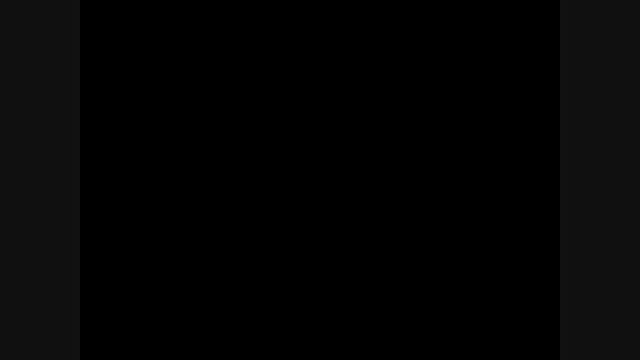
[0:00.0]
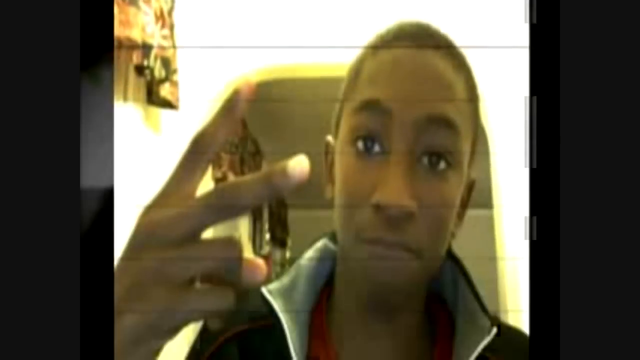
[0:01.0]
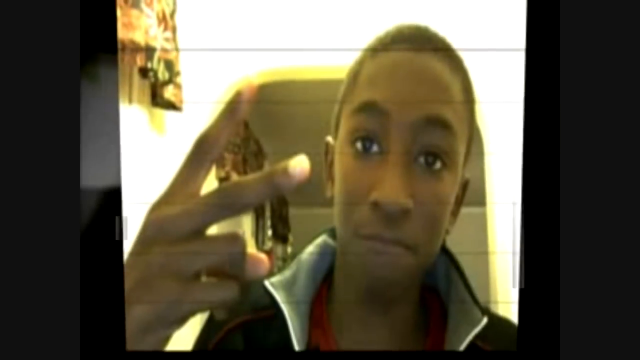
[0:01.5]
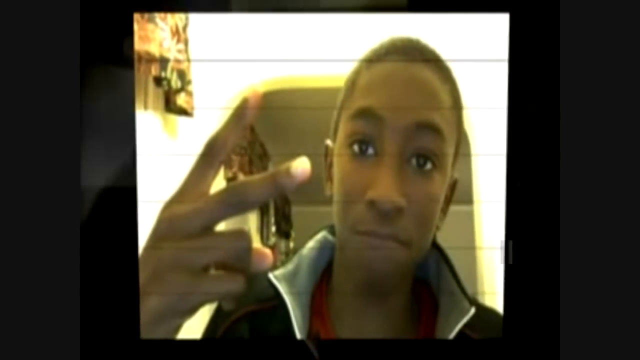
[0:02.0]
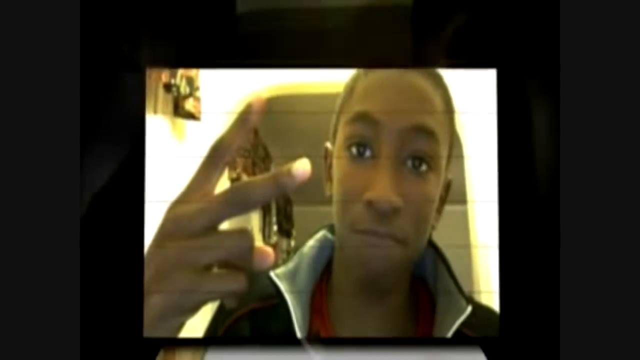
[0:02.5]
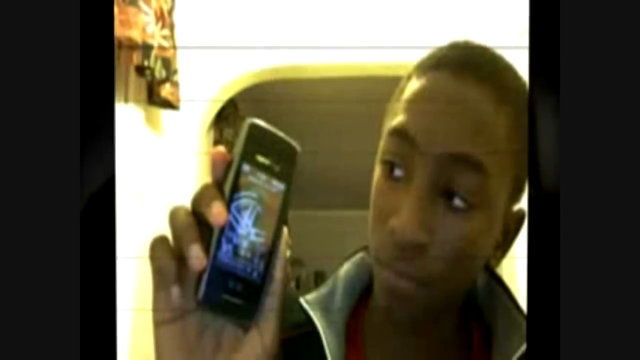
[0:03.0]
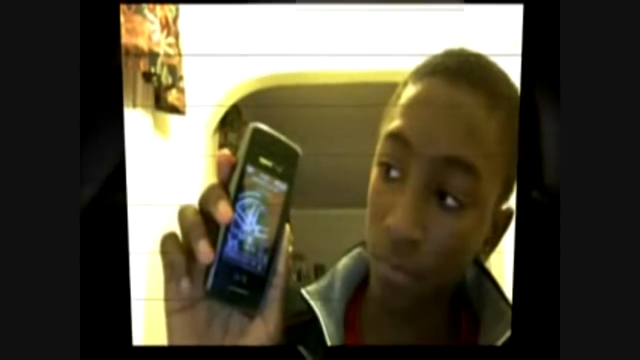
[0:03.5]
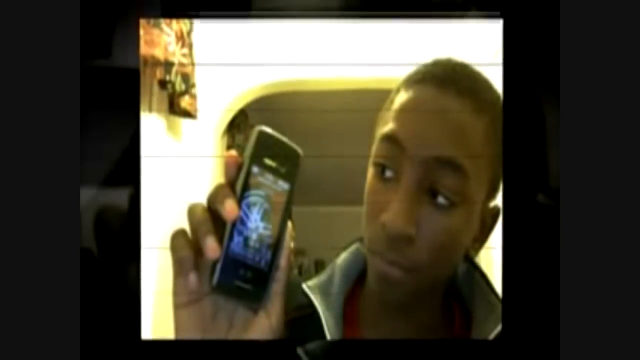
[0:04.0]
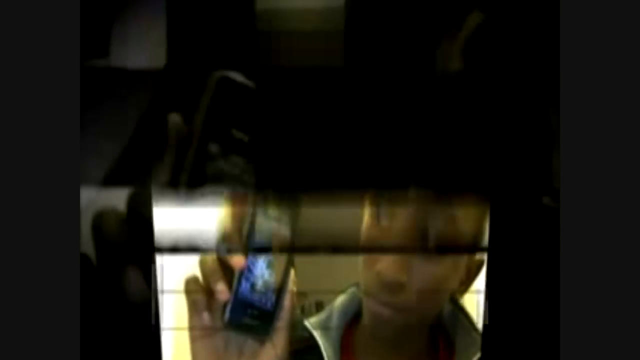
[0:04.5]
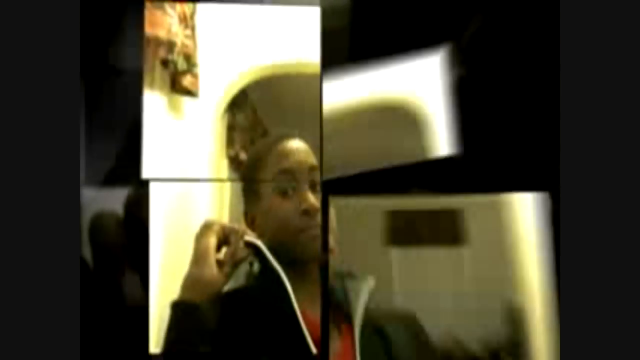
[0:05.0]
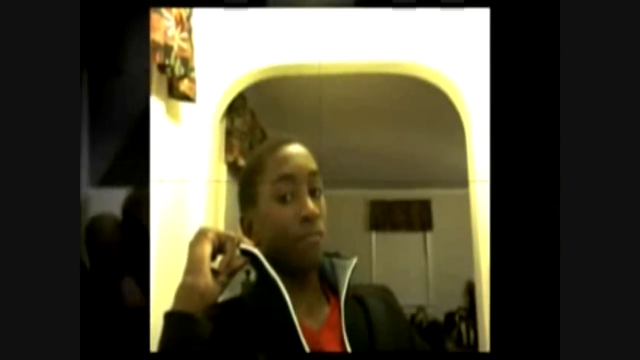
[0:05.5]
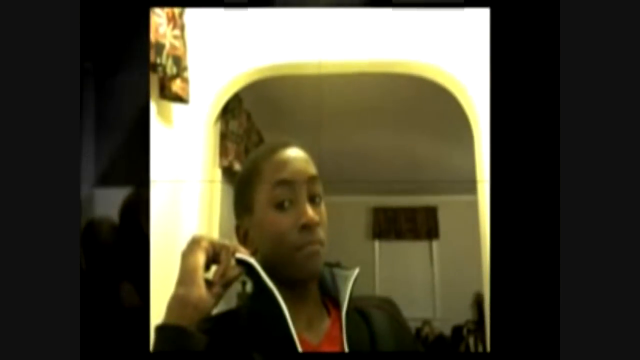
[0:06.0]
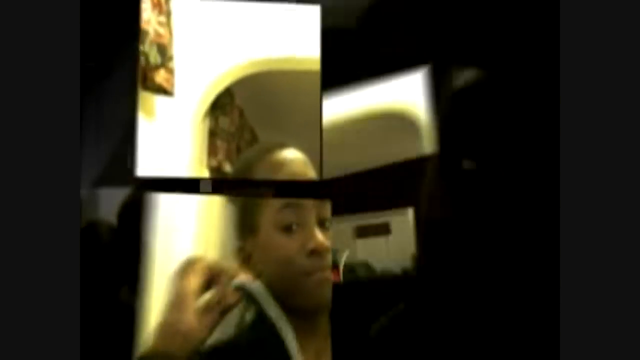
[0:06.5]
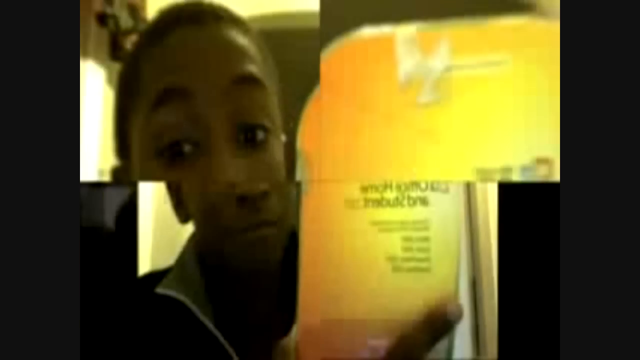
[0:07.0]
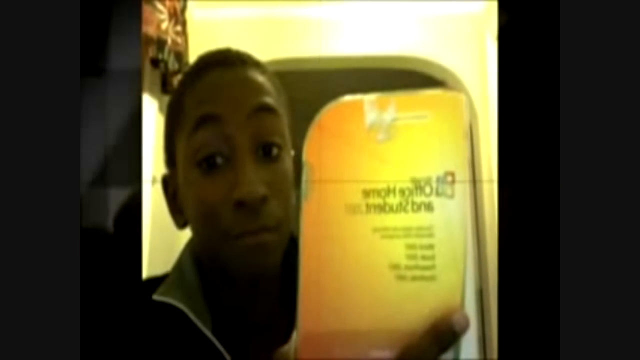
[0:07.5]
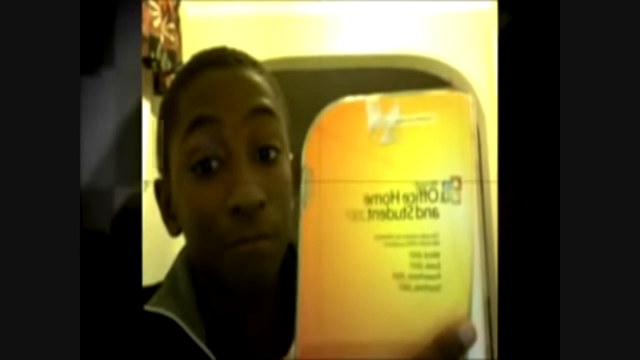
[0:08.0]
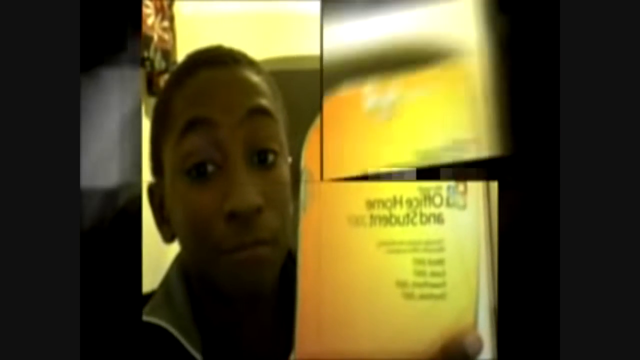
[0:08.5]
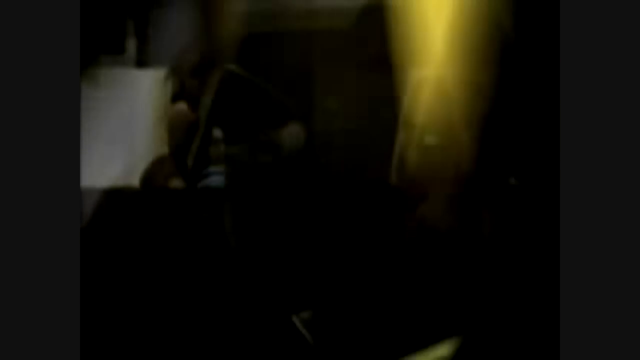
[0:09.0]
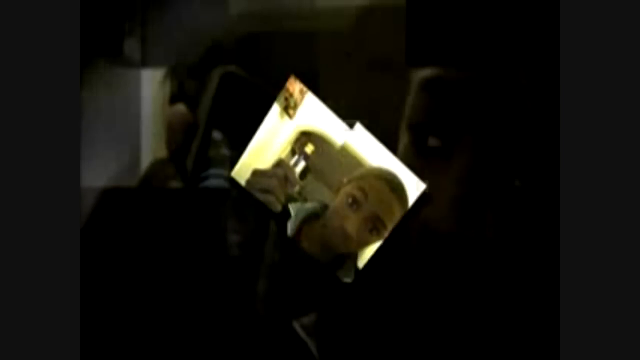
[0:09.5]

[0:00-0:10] An image shows a teenage boy with dark skin, dark eyes and very short dark hair, sitting in a chair, with a floral lampshade in the top left-hand corner of the image. The image is not particularly good quality and there are lines across the screen. He holds his right hand up, making a V sign at the camera. The image flips, and the same boy holds a phone in his right hand and looks at its screen, which appears to show something blue. Another flip shows the boy sitting in a different chair, looking at the camera, and the video quickly moves on to another image of the same boy. He appears to be holding something up, though neither of his hands is visible; it is possibly a document that says "Office Home". Different effects are used between the images: sometimes the picture flips upside down before the new one comes on, and other times it is divided into four quarters.